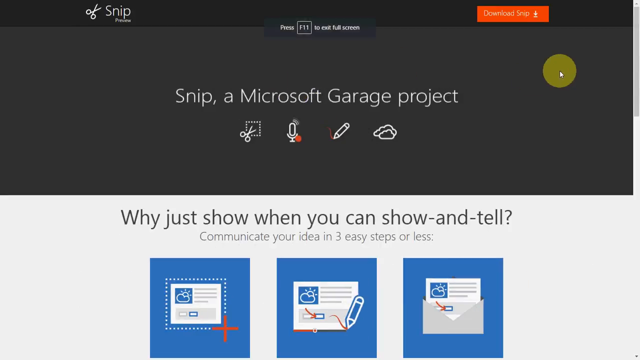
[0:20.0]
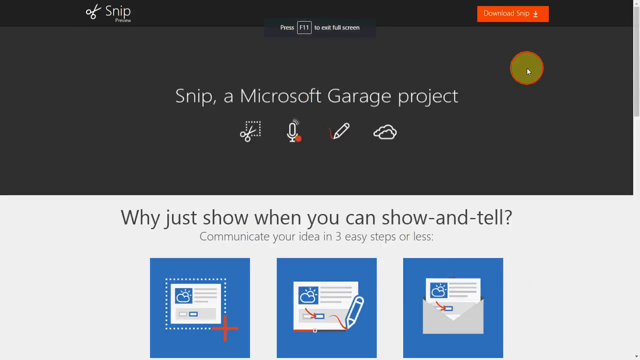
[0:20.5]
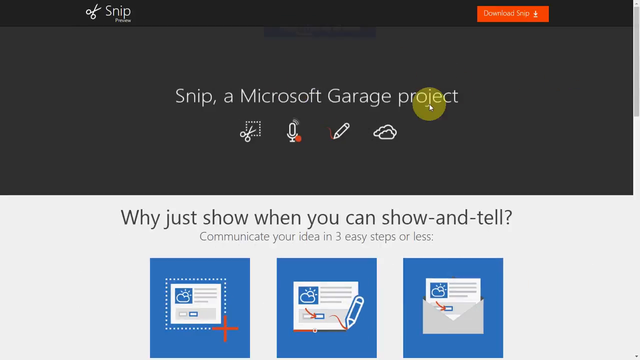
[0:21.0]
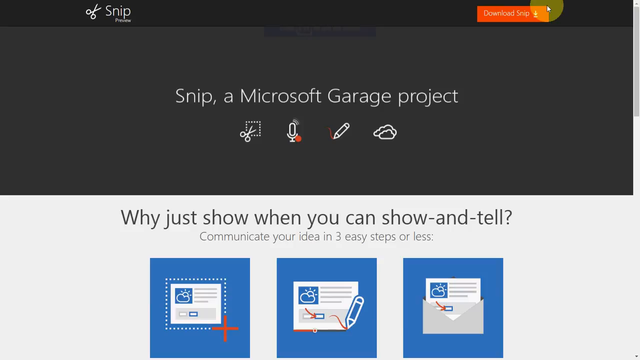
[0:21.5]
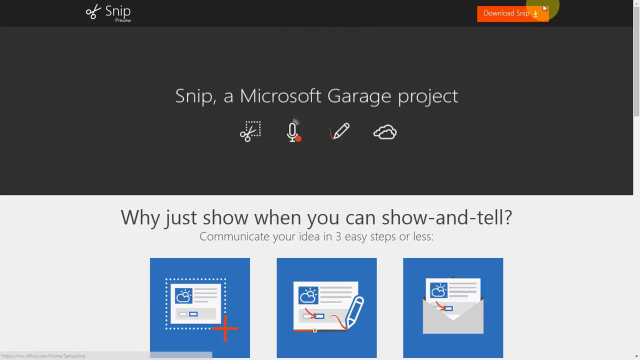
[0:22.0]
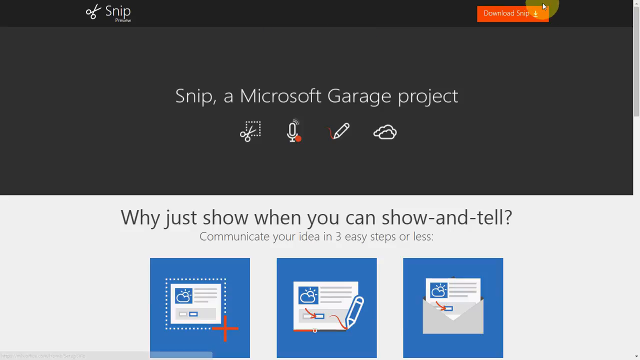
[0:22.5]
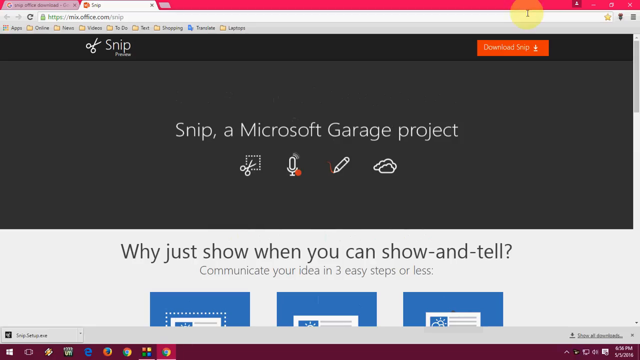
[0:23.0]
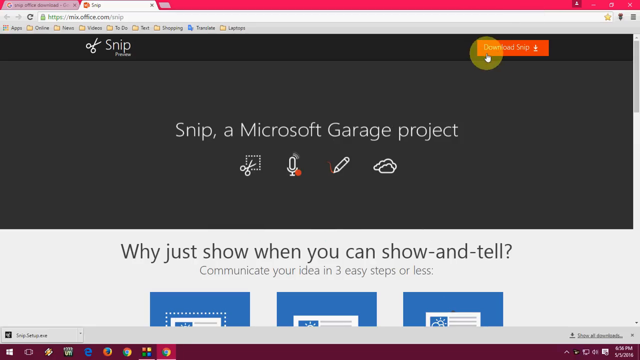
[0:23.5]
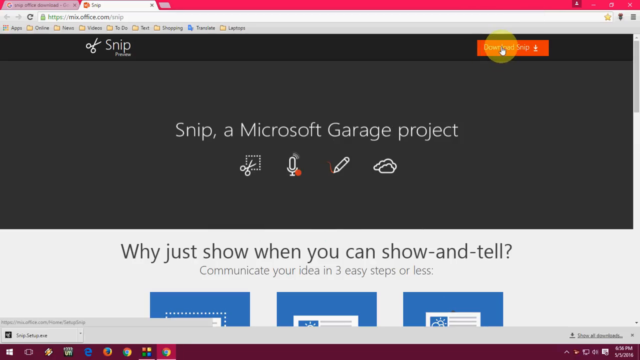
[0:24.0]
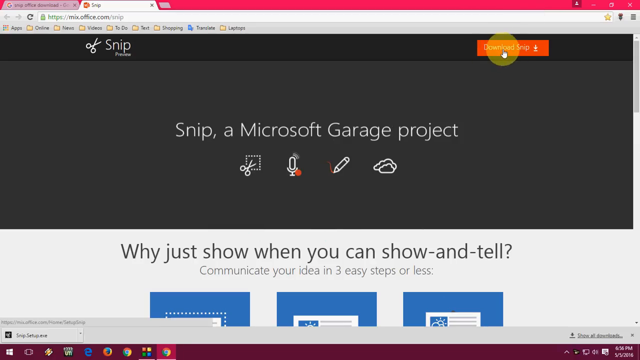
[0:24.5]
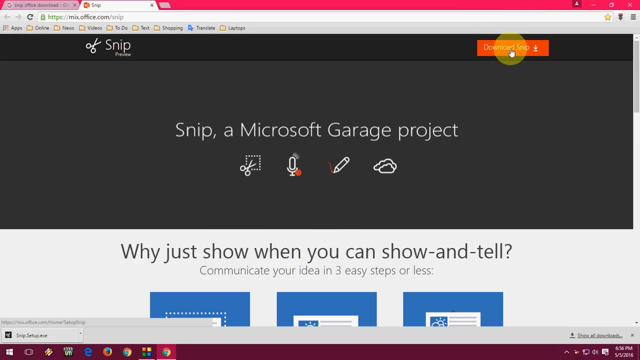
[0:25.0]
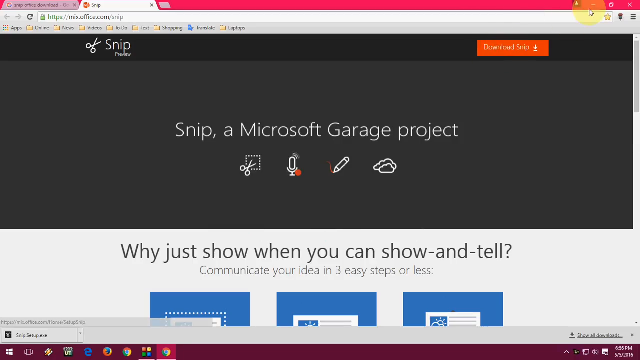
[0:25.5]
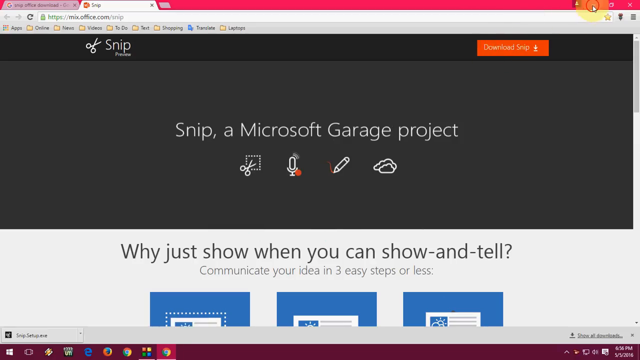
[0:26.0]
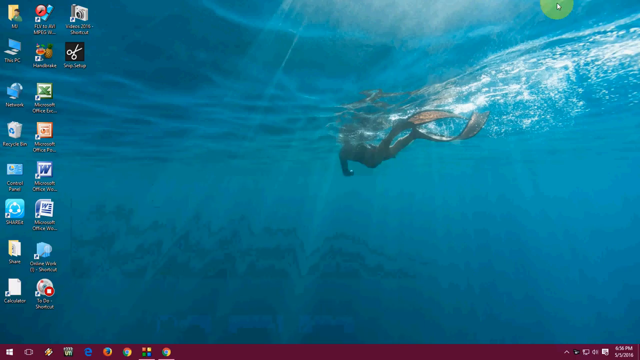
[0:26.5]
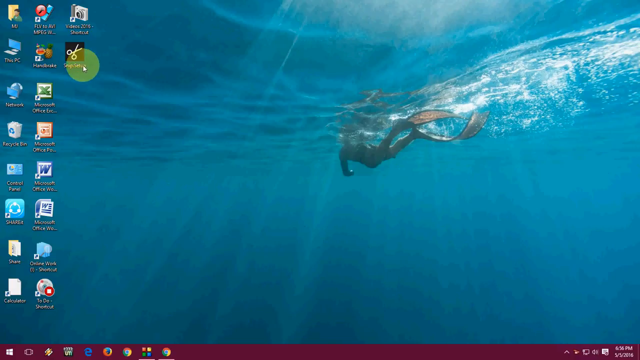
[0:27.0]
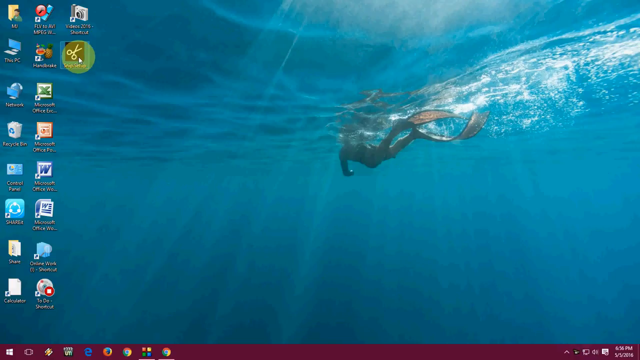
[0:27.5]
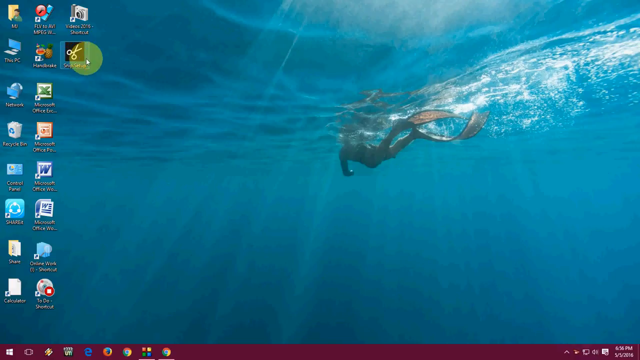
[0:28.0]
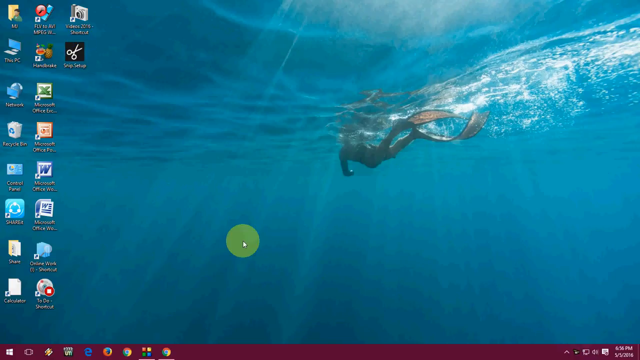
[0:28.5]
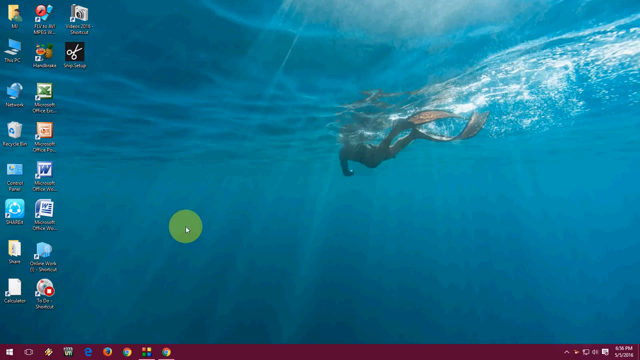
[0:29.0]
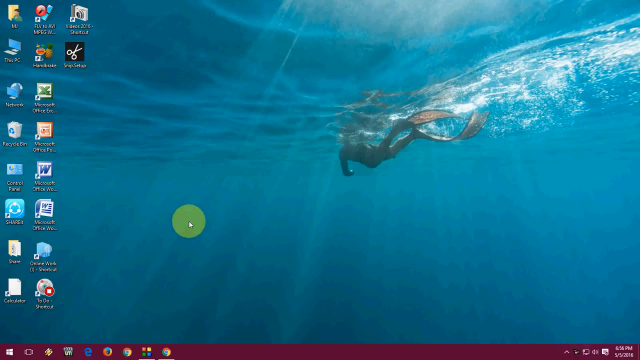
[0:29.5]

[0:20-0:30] The Snip Microsoft Garage Project page for the SnipOffice application appears. The mouse shows that the download has been done and the window is minimized to the work area. The video demonstrates how to enter the page, download the SnipOffice app from Microsoft, and minimize to the work area.